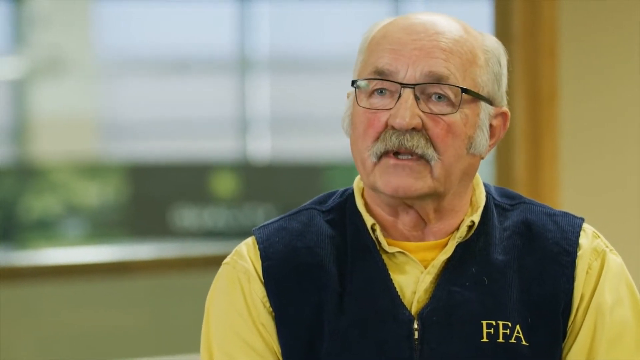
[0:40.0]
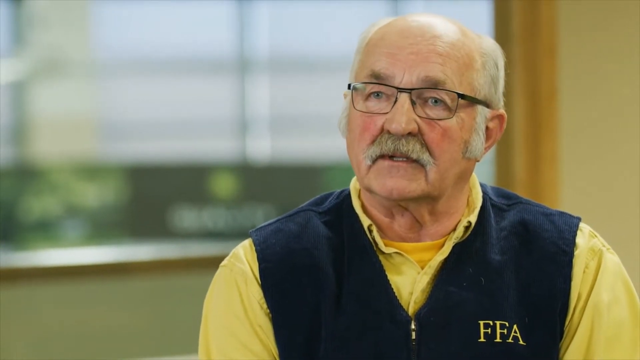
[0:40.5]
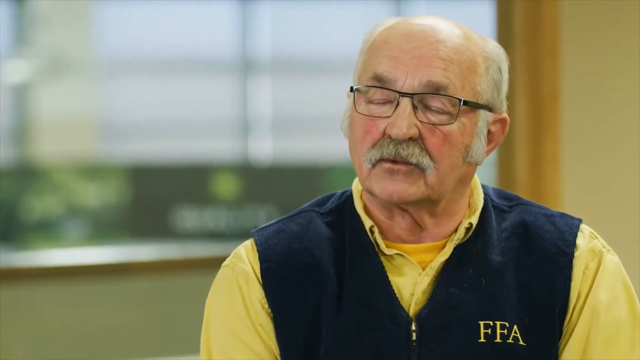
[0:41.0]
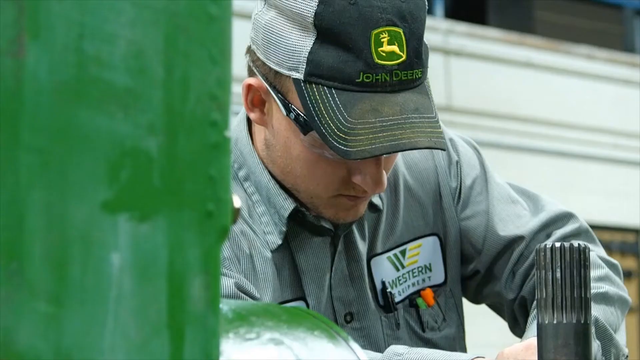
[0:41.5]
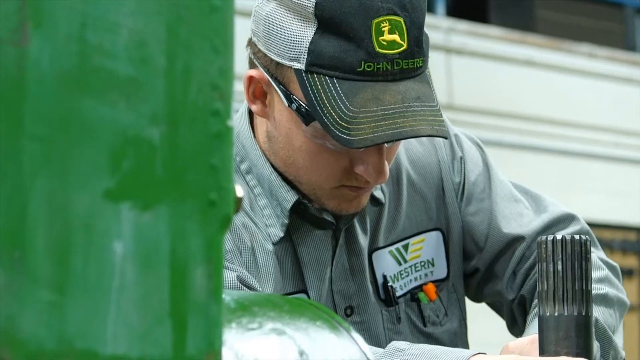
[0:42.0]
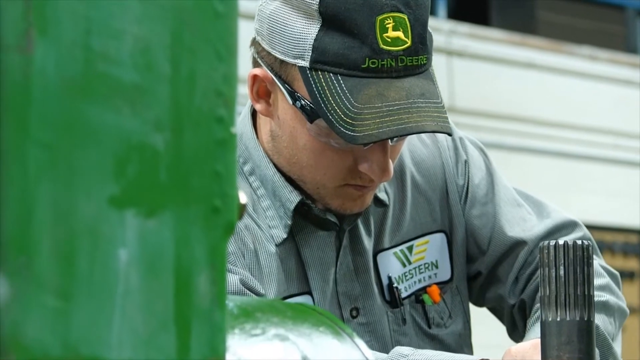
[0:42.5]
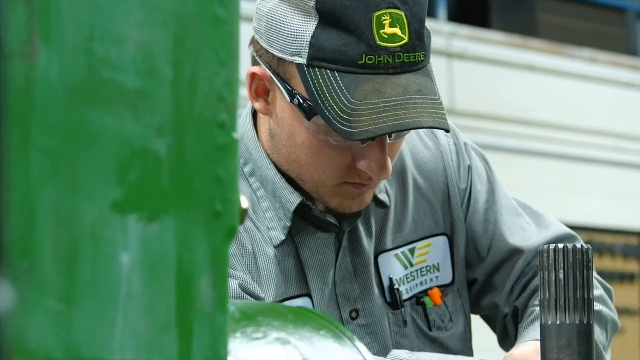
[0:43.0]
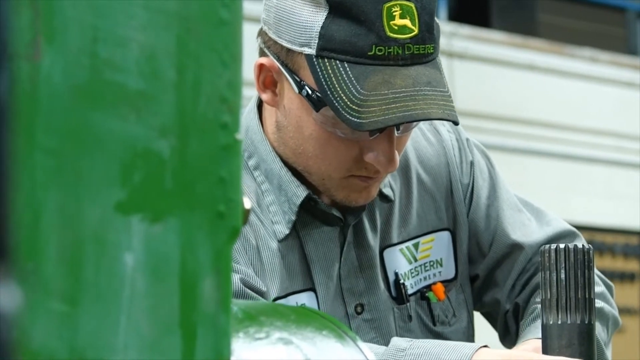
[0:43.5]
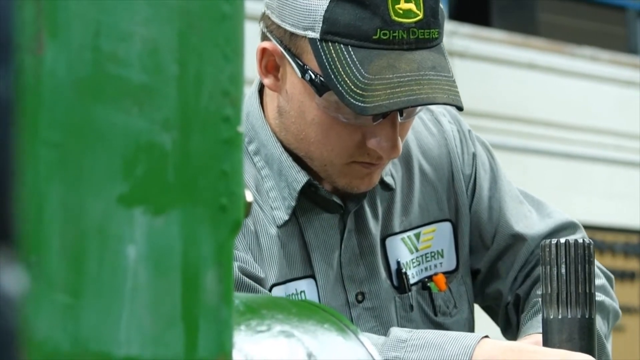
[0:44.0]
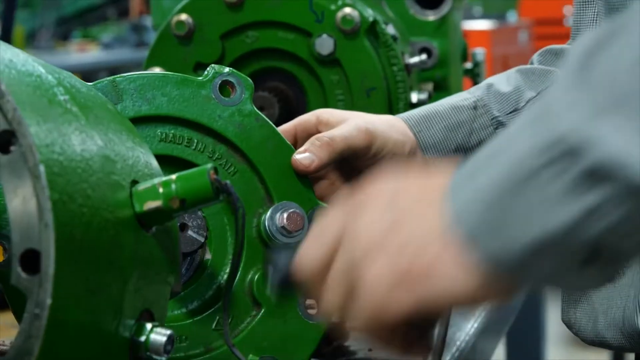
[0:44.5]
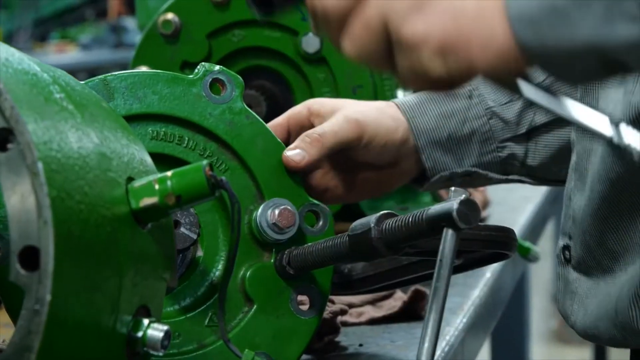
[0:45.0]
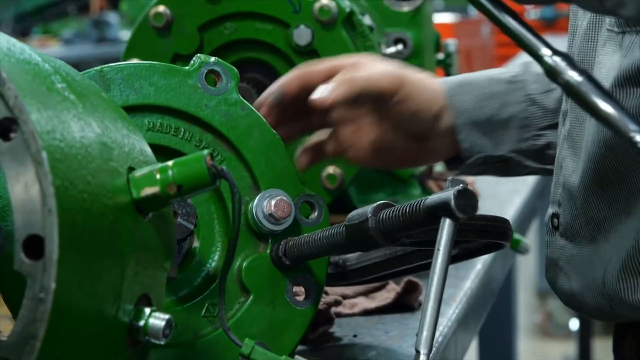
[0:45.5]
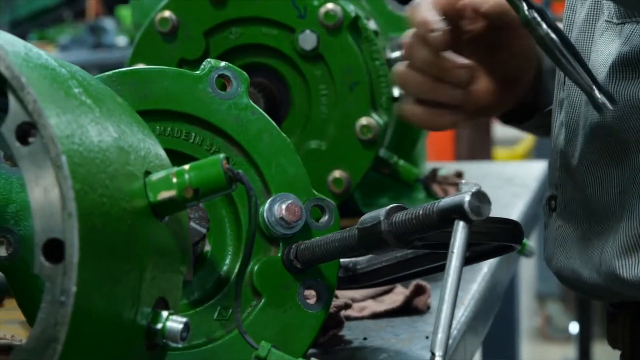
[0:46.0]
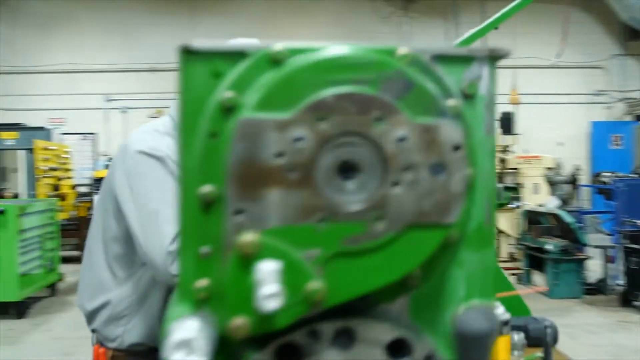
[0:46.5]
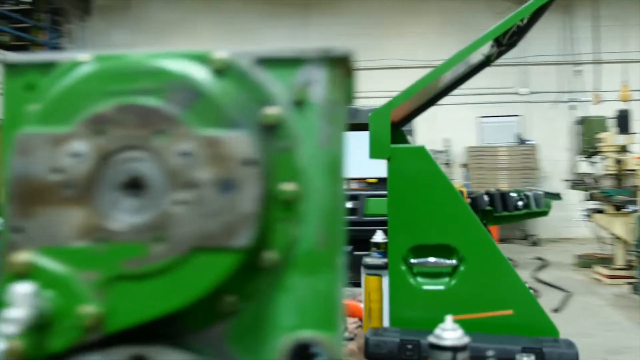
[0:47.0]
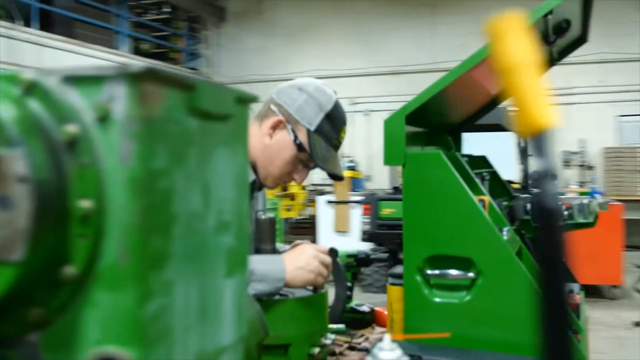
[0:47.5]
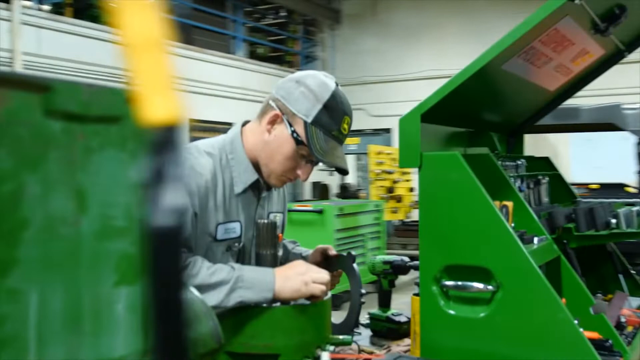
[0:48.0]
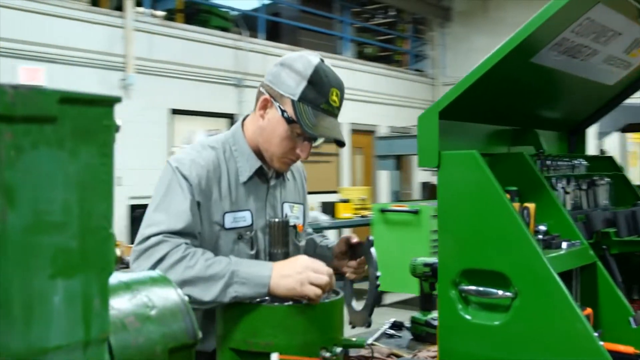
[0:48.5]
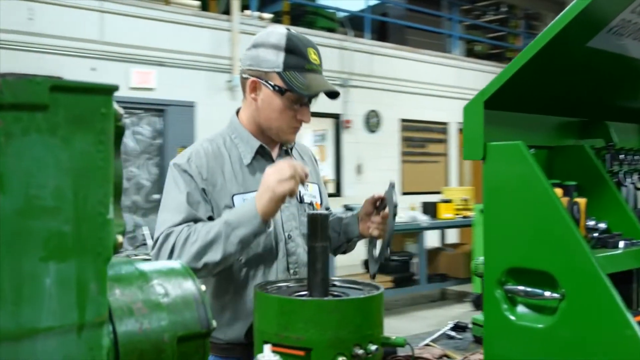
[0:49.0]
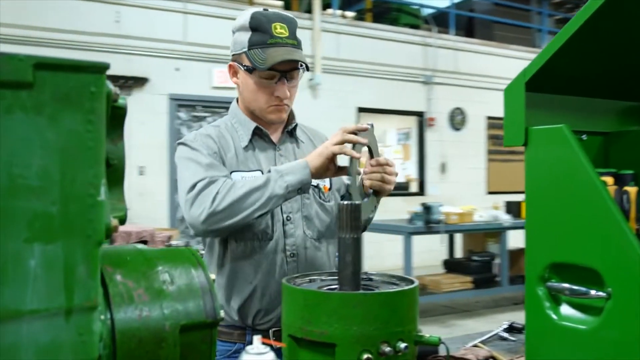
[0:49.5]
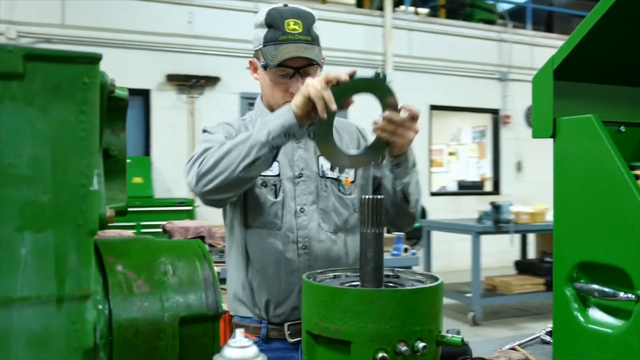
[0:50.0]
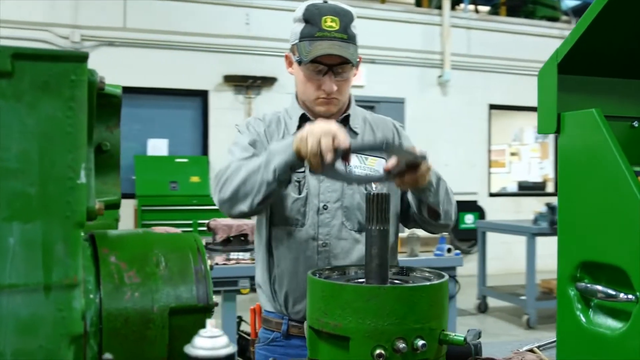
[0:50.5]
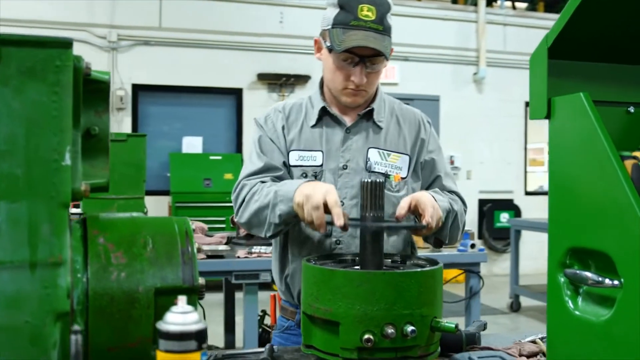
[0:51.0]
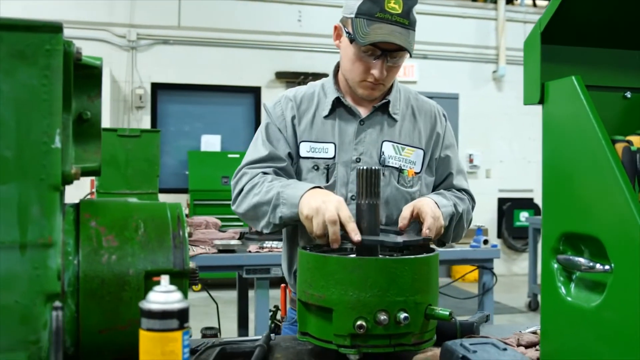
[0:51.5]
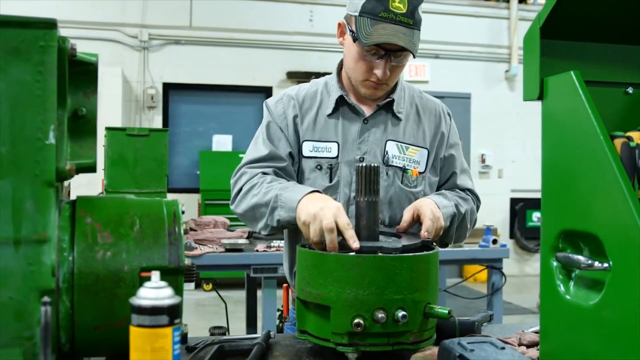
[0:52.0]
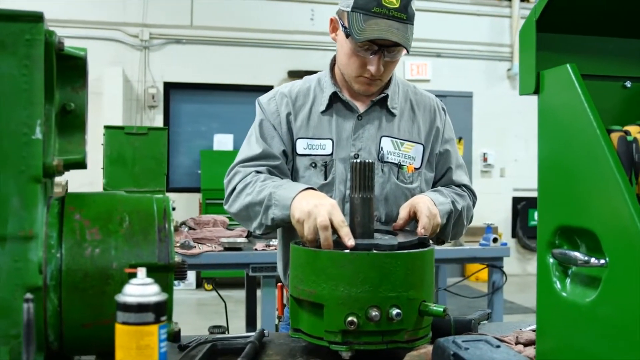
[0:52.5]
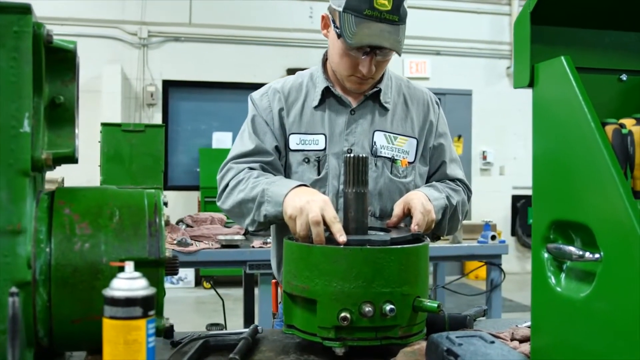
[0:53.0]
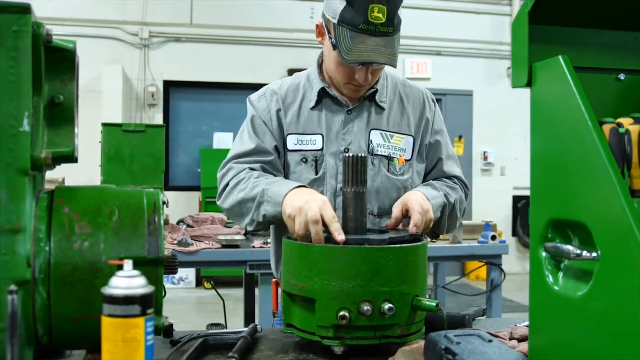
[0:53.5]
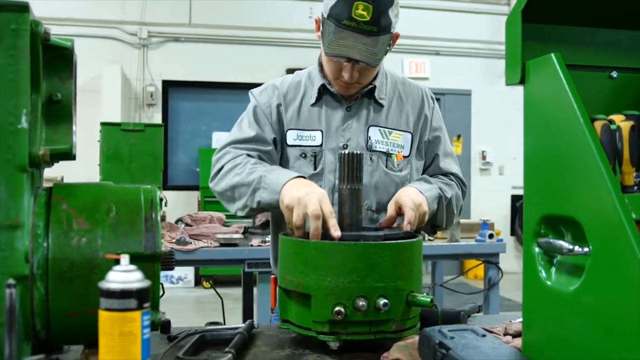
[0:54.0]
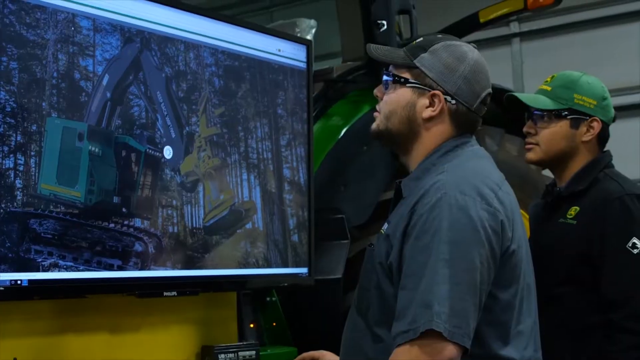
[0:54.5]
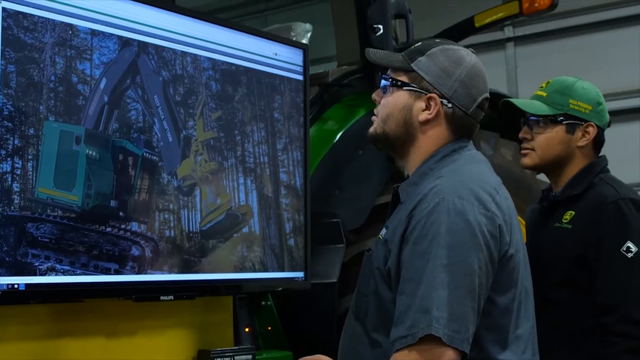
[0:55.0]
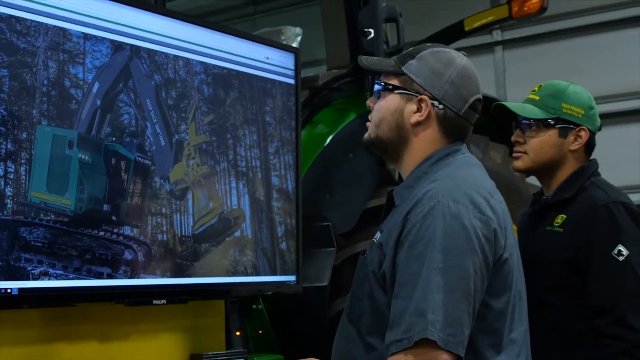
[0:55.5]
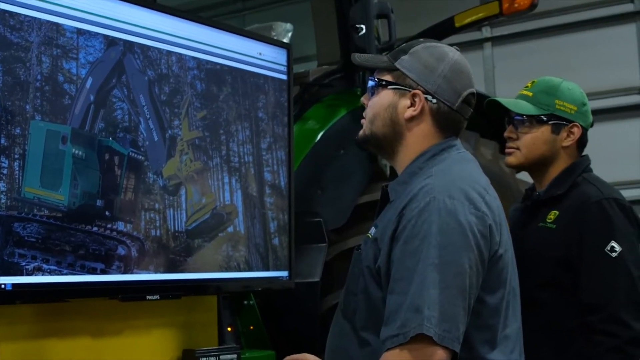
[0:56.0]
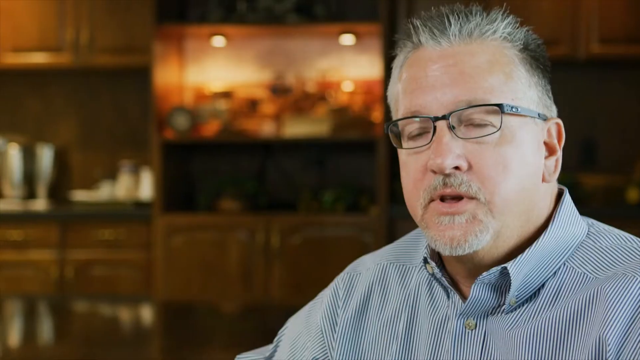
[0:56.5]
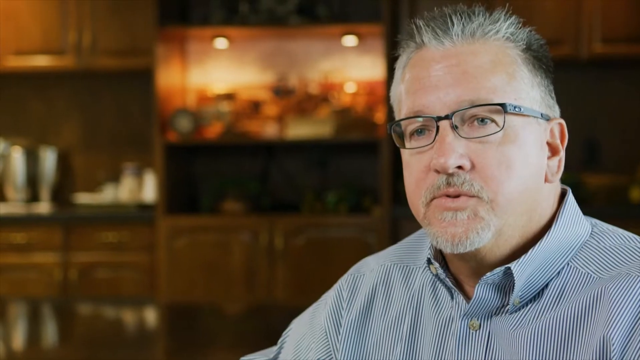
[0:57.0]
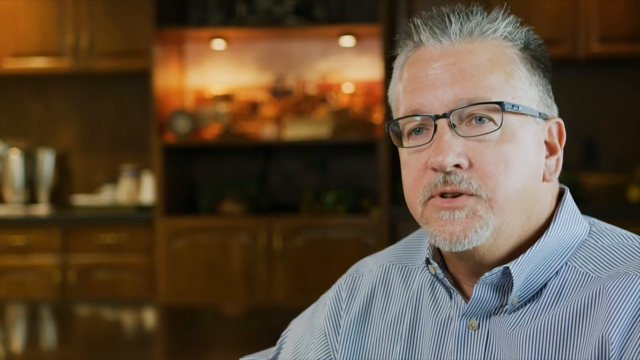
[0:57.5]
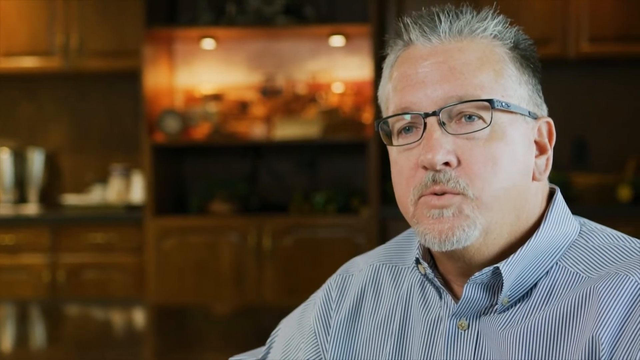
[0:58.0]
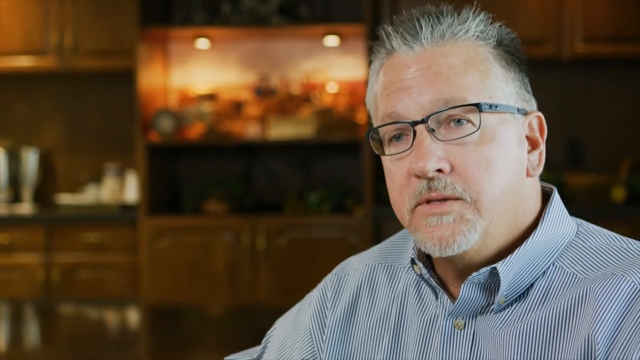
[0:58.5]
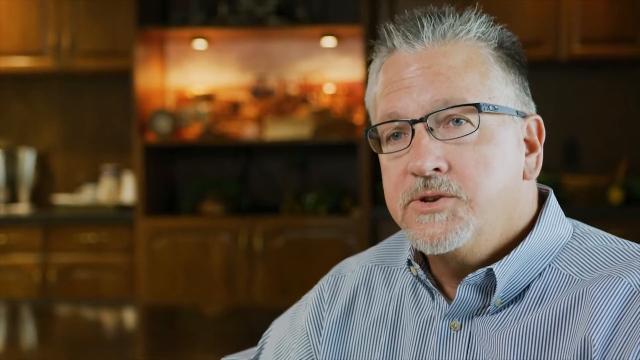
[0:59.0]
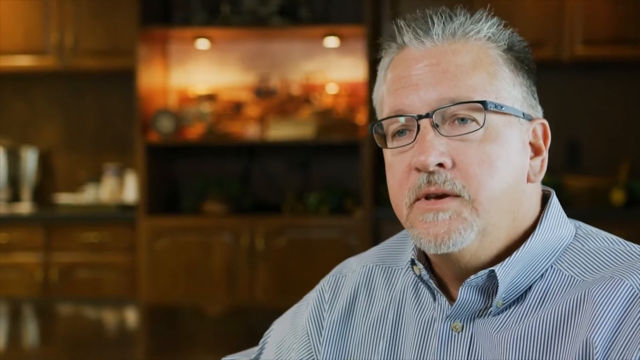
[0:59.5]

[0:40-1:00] A different man in a John Deere hat and protective glasses looks down, working on something in front of him. The shot is zoomed in so the man is in close-up, but not what he is working on. A green-colored column takes up the left side of the screen. In front of the man are several circular metal plates, one of which prominently says "made in Spain". The video zooms out and circles around to show a wider view: the man picks up a silver circular piece of metal and puts it onto a short black column set inside a green column. All around him are other work surfaces of the same bright green color. He sets the piece very carefully within the larger column and seems to be checking his work. Next, two men look at a video or computer screen on the left side, which shows a John Deere piece of equipment. The two men are on the right side; one wears a gray shirt, and the one toward the back wears a black shirt. The video then switches to another interview-style view of a man from the chest up, with short white and gray hair that is kind of spiked up in the front, wearing glasses and a blue and white striped shirt.